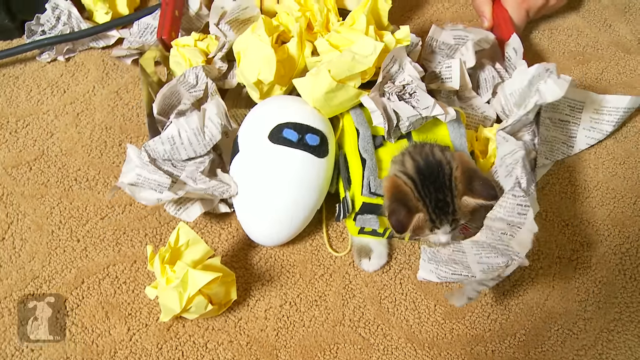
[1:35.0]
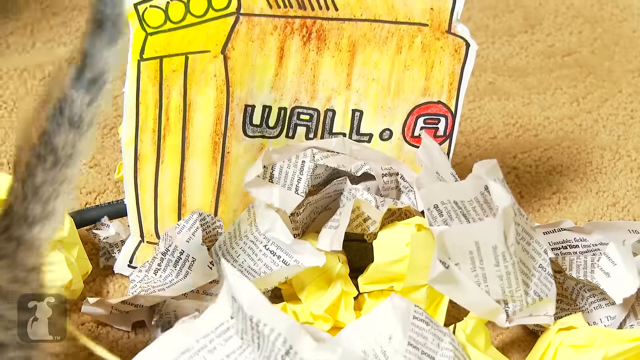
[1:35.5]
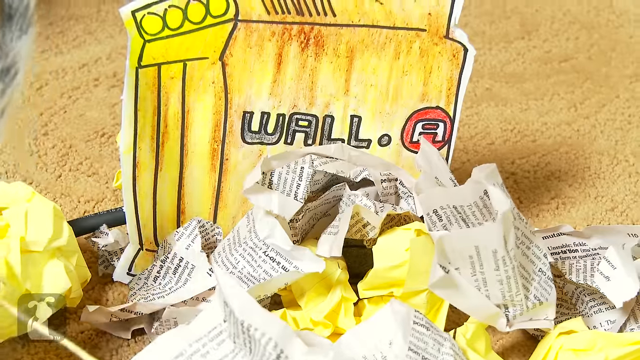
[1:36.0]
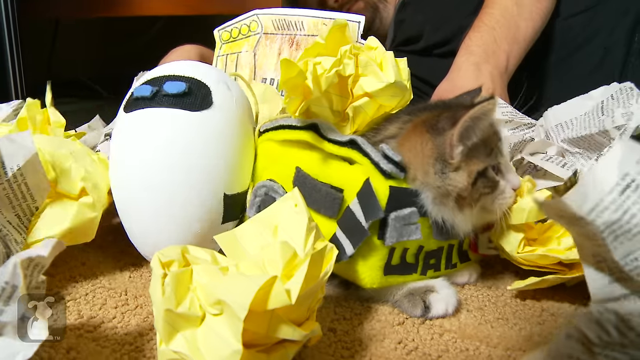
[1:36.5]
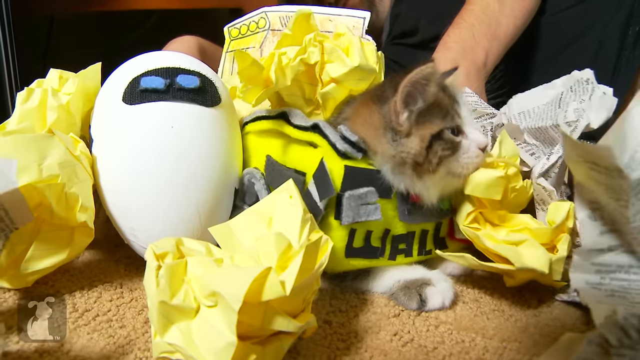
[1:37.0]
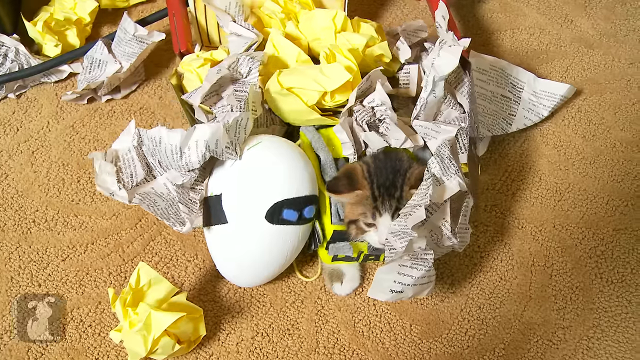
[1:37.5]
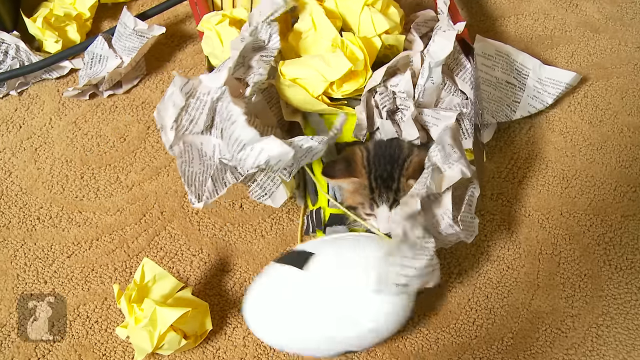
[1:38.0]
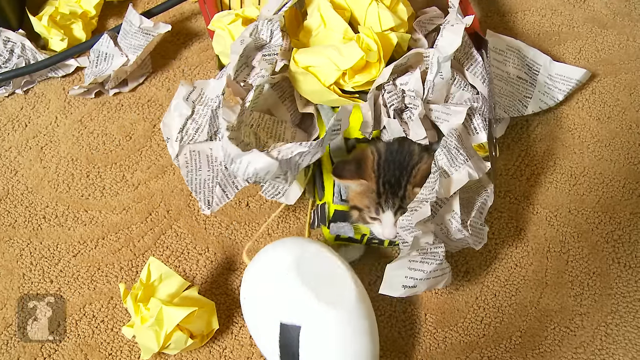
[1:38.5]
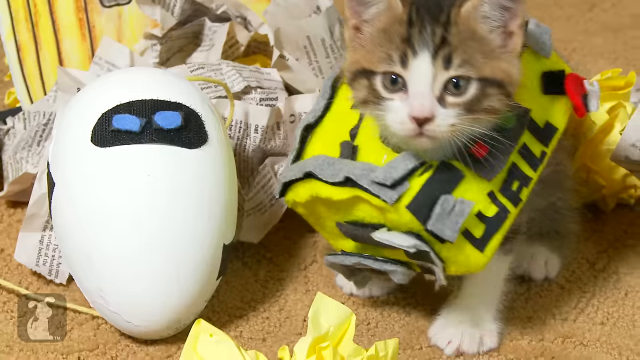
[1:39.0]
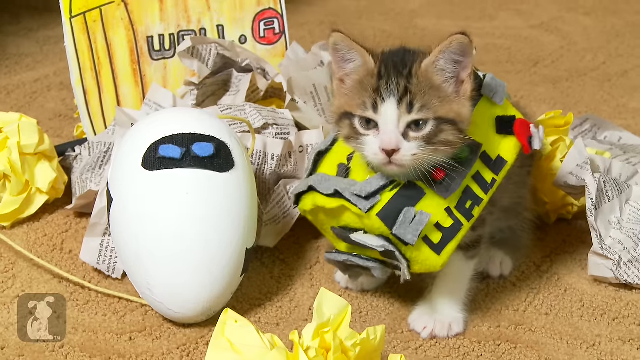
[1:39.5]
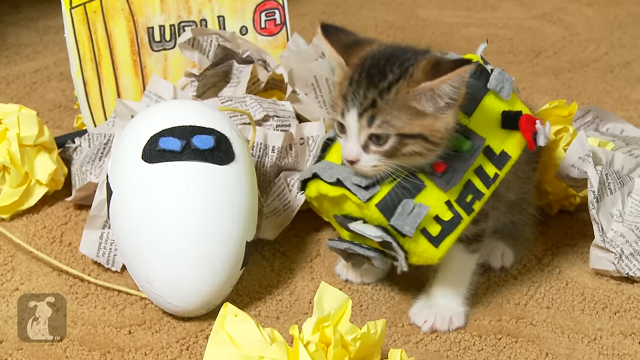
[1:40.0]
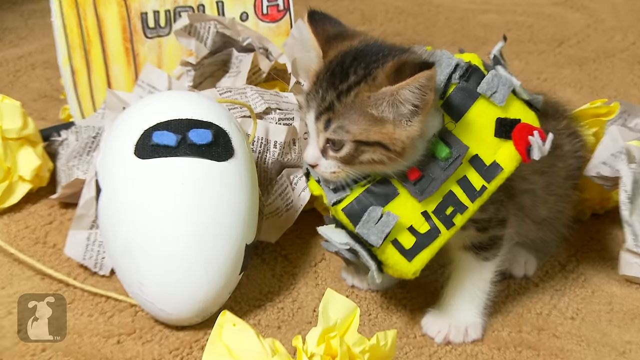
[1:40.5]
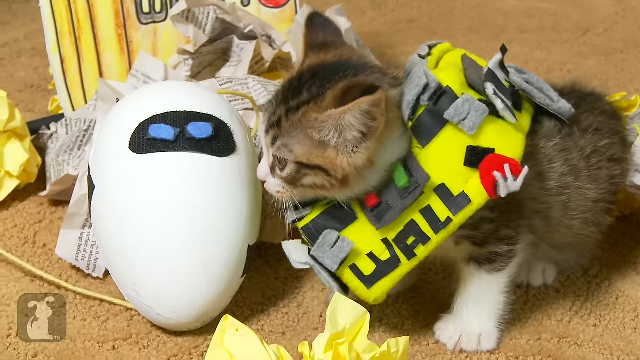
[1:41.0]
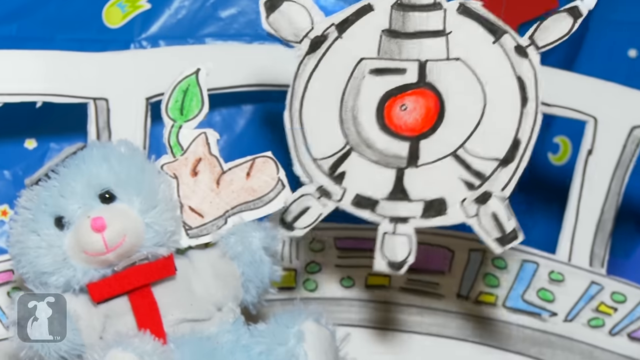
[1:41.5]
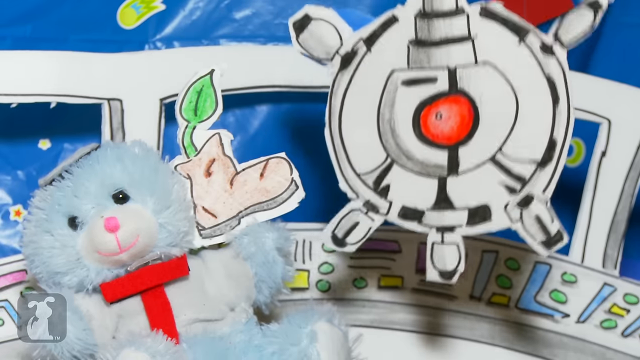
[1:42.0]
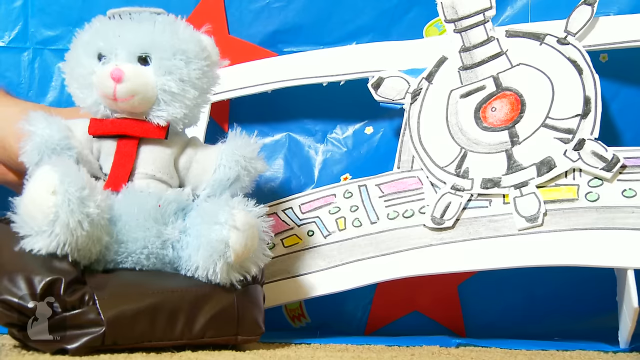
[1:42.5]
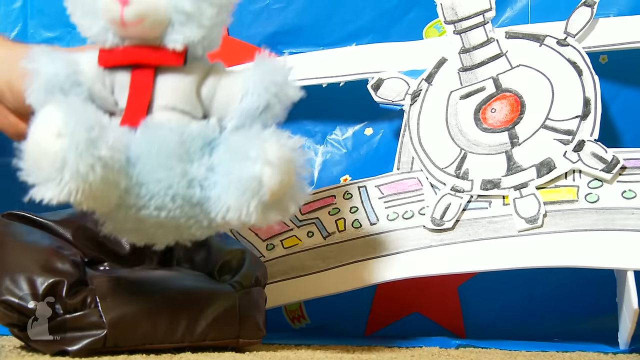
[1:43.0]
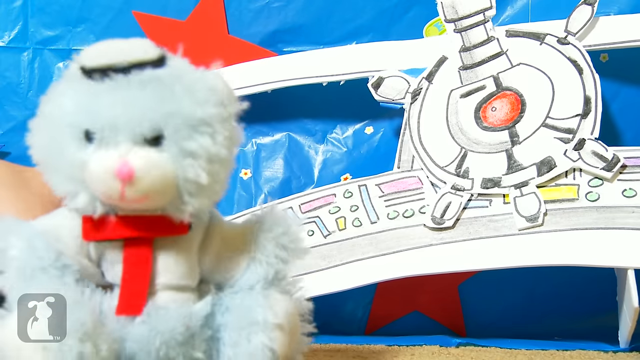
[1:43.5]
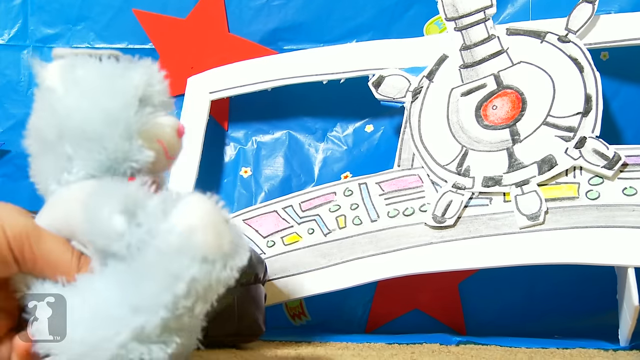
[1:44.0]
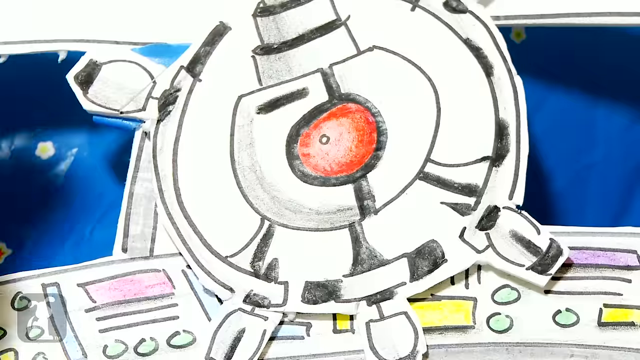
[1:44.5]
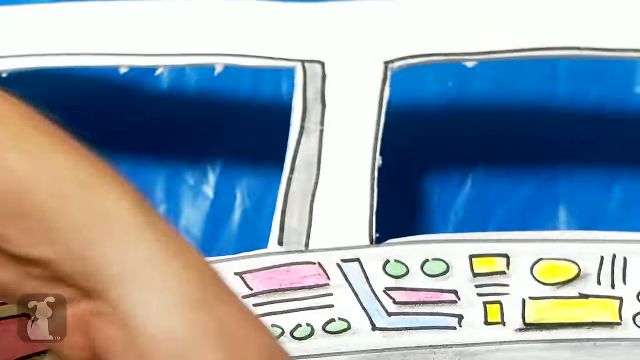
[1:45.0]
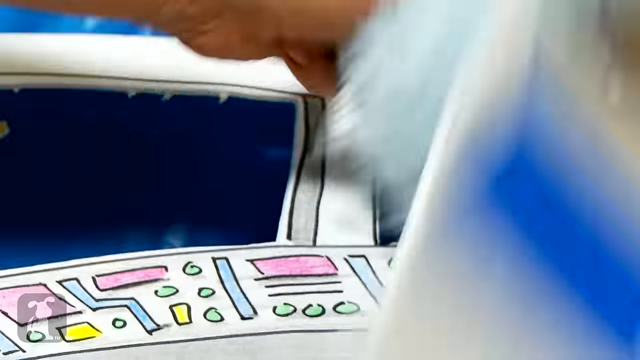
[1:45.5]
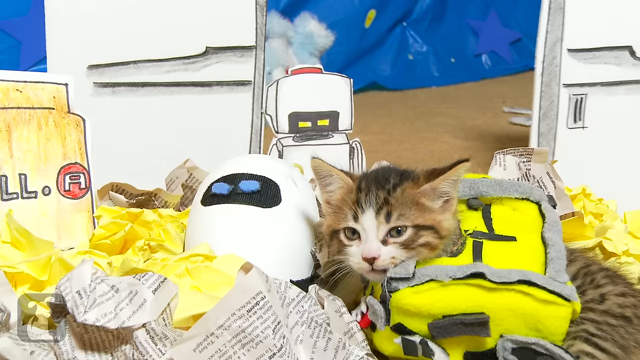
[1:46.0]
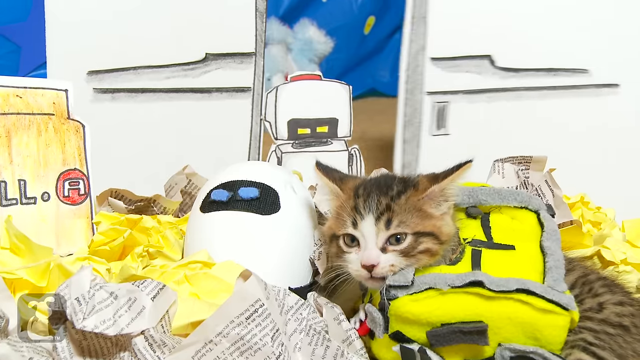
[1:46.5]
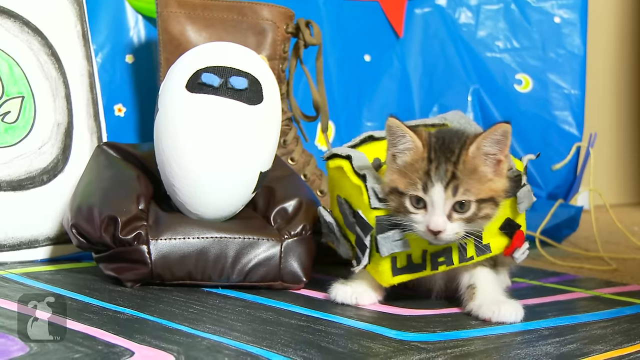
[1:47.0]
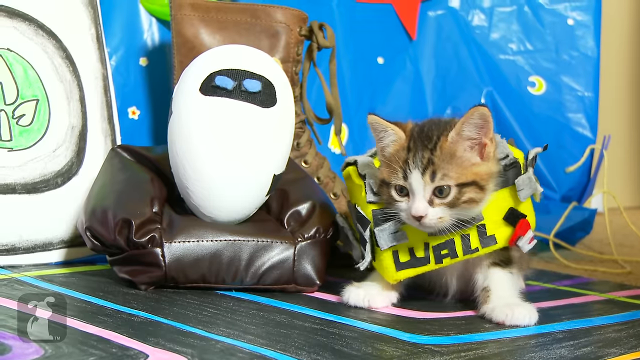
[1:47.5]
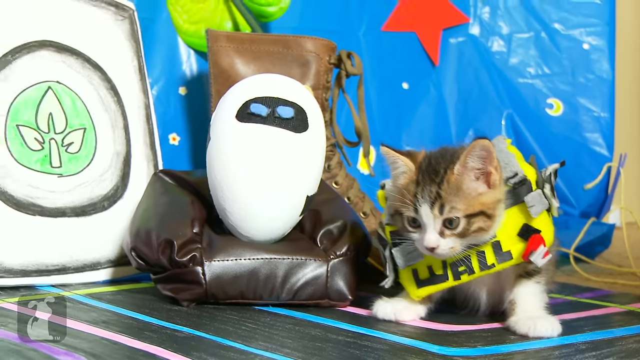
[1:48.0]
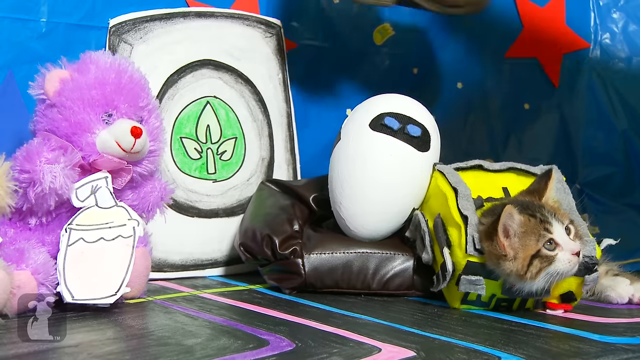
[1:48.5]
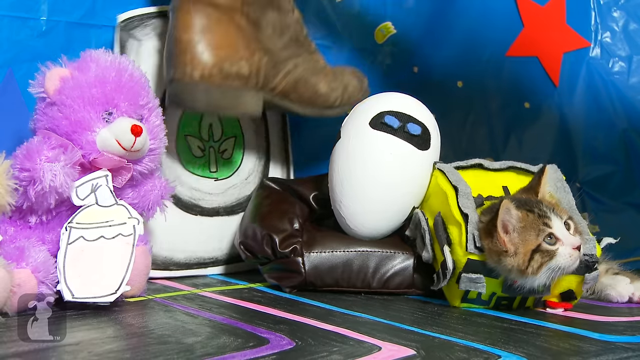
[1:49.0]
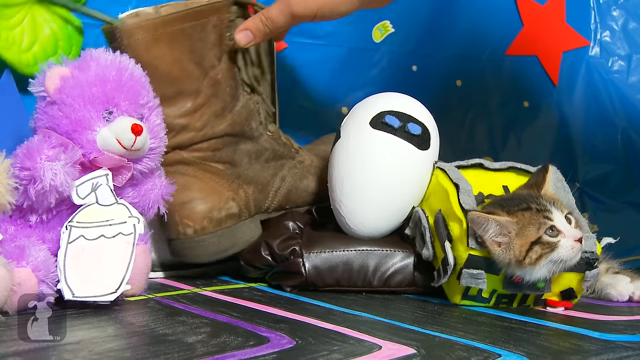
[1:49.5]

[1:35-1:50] The cat and the egg-like robot are among a lot of trash, and the trash is being scooped up along with them. The video cuts to an image of what appears to be a bluish sheep punching another robotic figure. This occurs near the terminal, where there seems to be a drawing of a boot with a leaf coming out of it. The purple sheep, the egg-like robot and the cat are together, and another robotic entity is in the back, this time not evil-looking and seemingly possibly on their side. The sheep has a drink that is drawn but not colored, almost black and white. Everything seems safe and everyone is together.